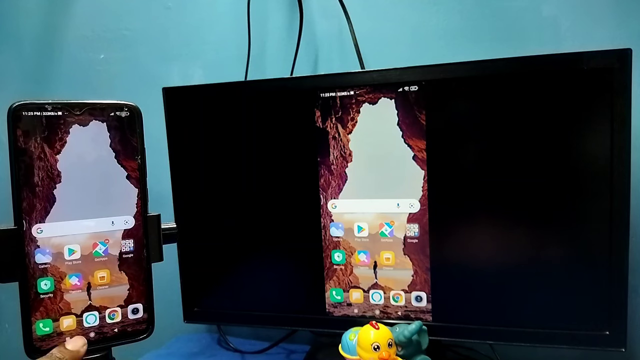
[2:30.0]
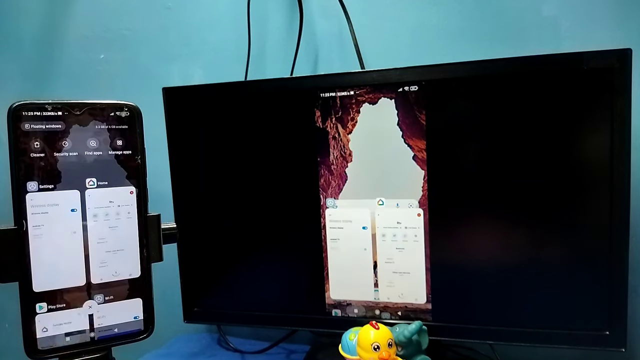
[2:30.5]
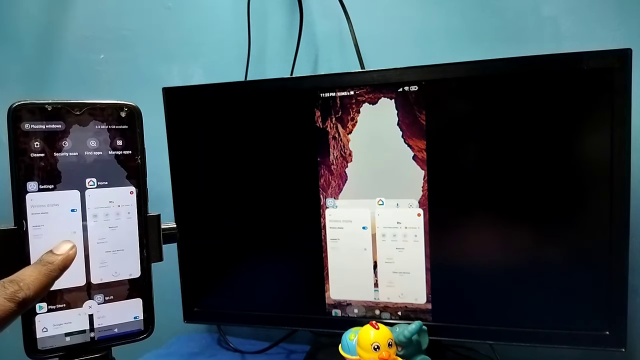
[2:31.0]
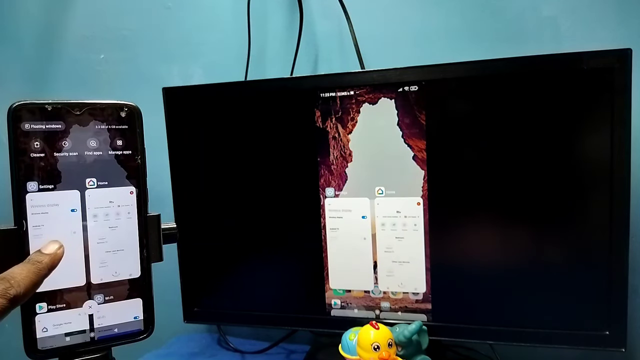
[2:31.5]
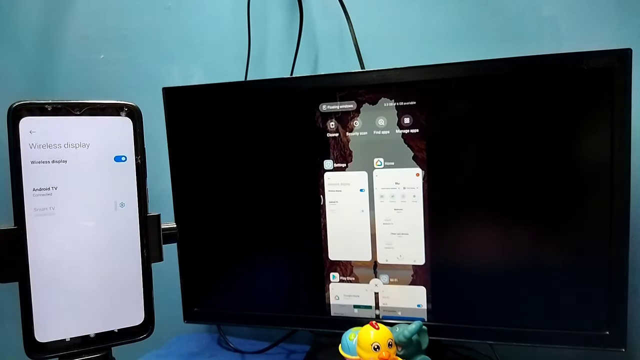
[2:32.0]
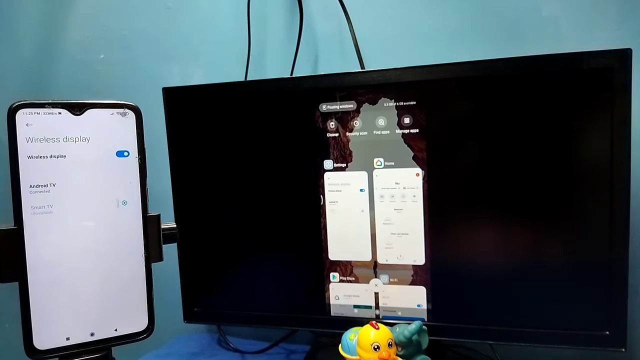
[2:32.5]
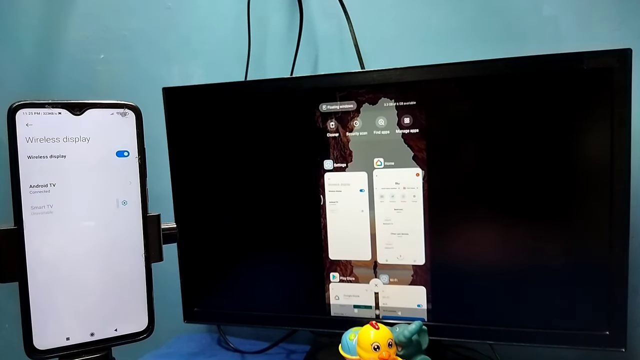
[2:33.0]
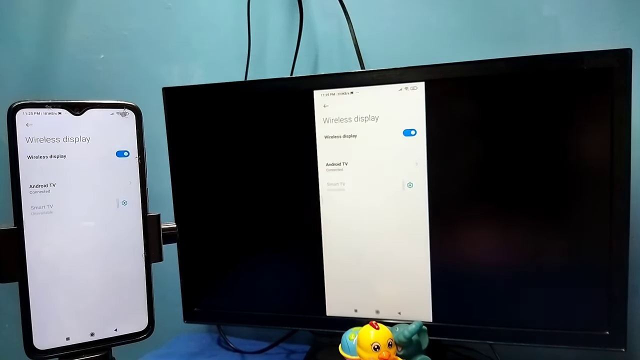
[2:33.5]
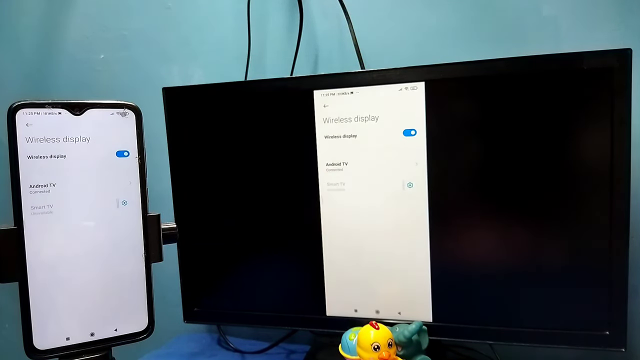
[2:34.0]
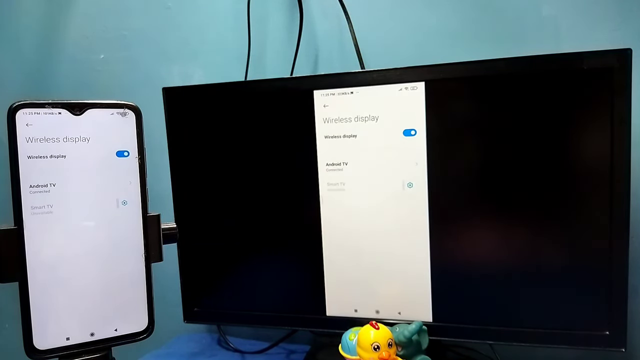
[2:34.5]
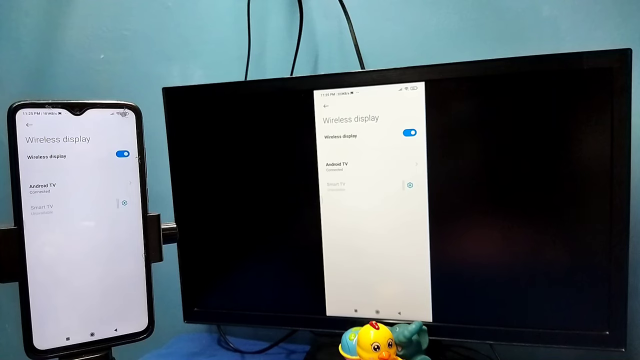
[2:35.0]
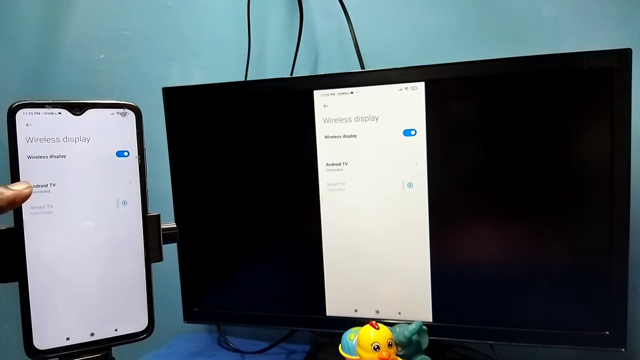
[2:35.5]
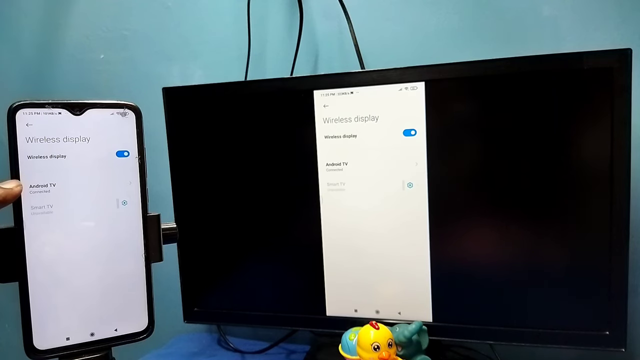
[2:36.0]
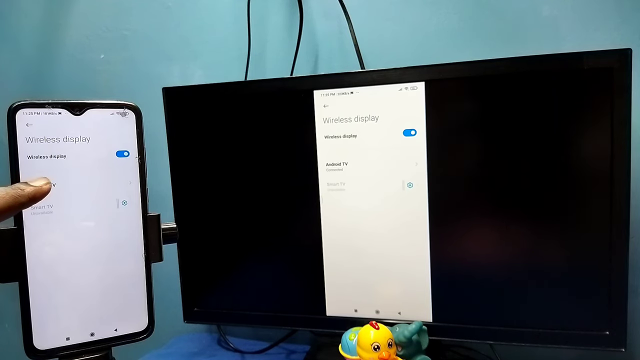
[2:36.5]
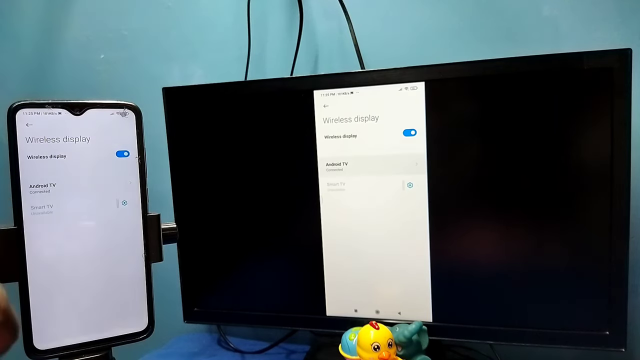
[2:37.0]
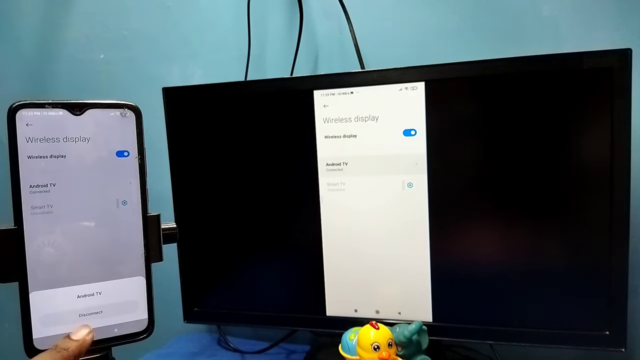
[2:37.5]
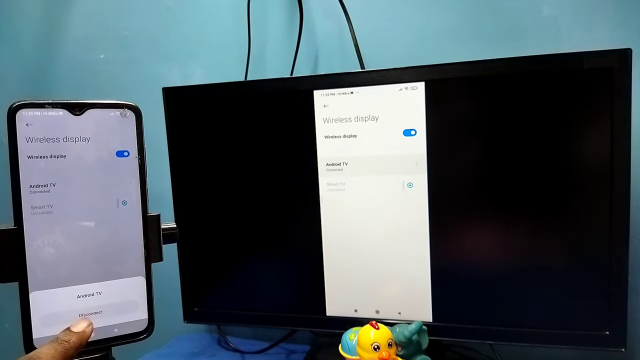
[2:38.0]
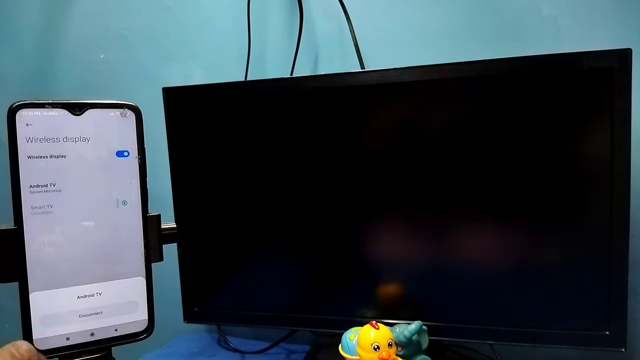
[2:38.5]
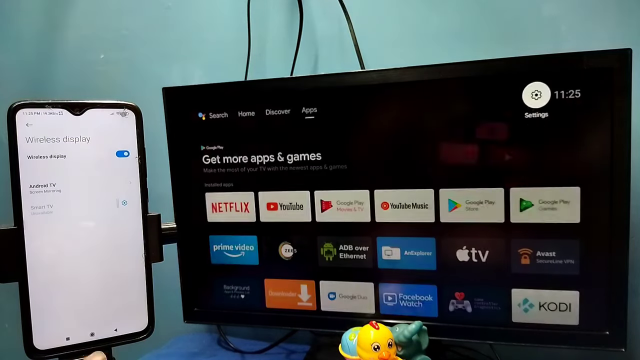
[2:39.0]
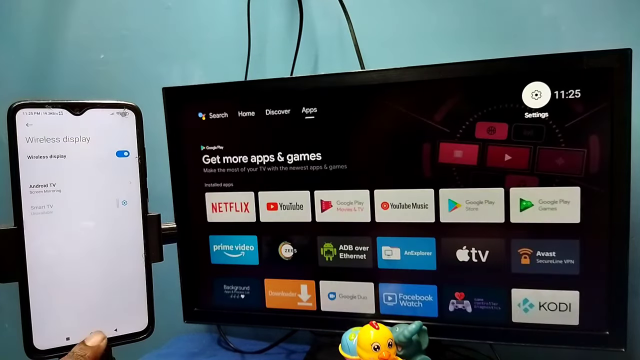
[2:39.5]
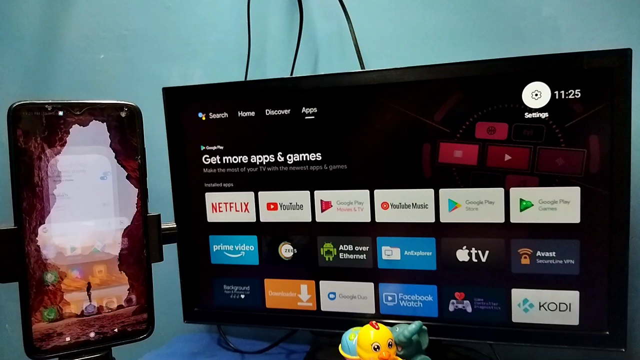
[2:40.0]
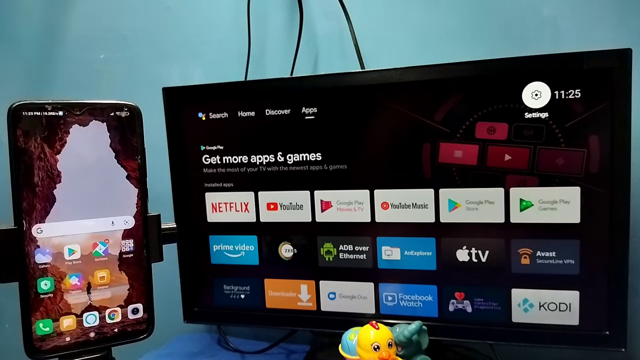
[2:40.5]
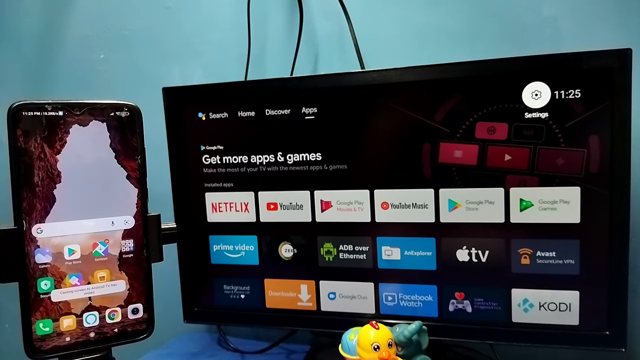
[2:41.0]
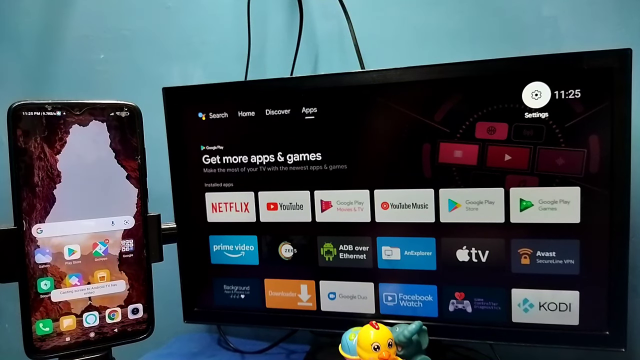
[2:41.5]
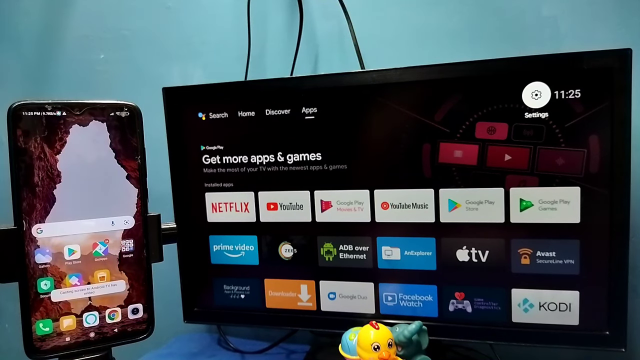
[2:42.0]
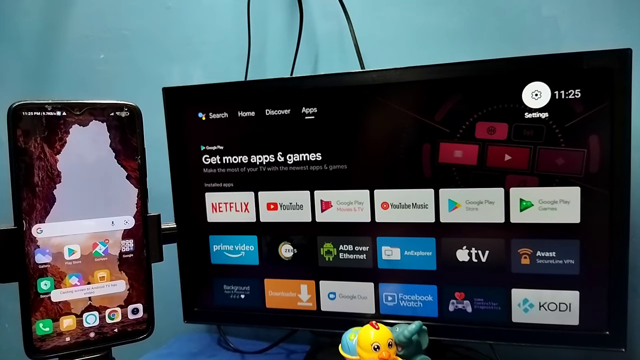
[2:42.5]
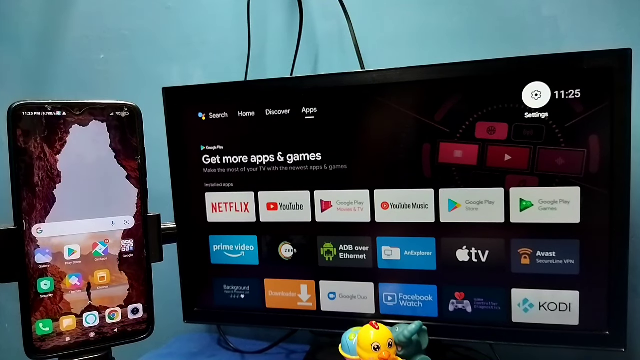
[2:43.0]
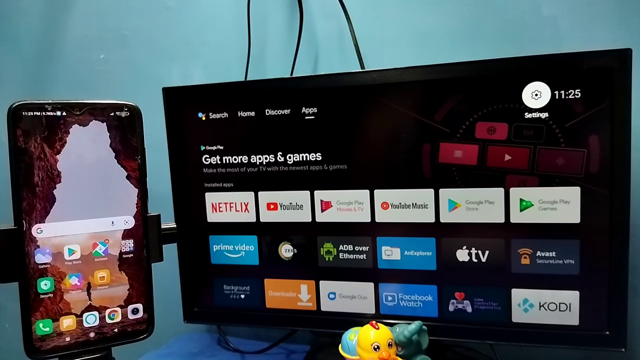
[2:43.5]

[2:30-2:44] He points to the wireless display page on his cell phone and shows advanced Android TV, which then shows up on the flat screen. This part apparently shows how to disable the mirroring connection between the cell phone and the flat screen. No keyboard is visible.